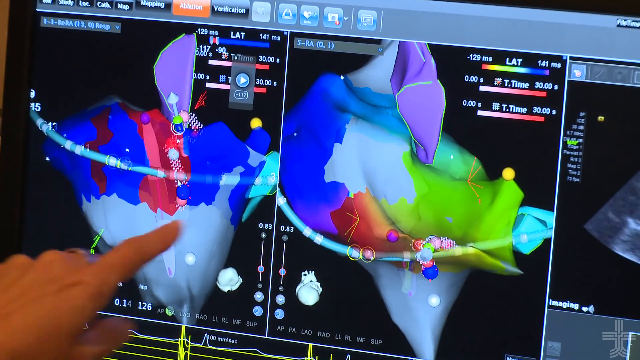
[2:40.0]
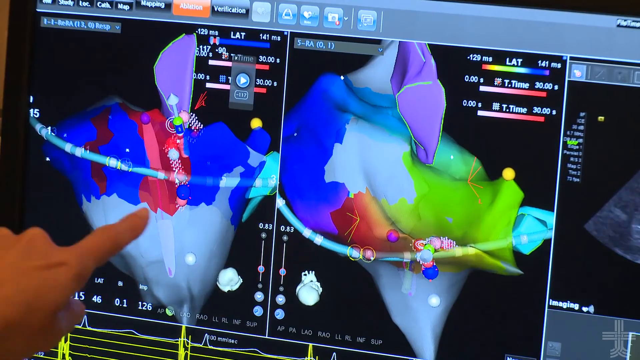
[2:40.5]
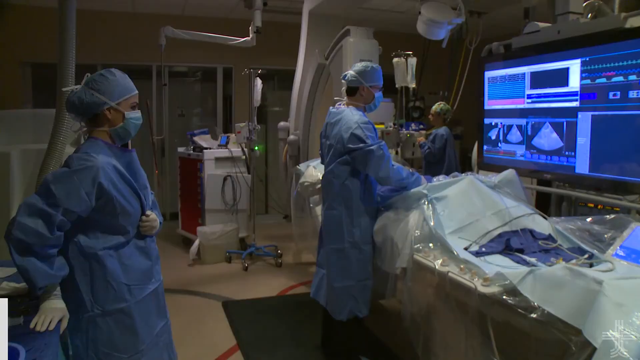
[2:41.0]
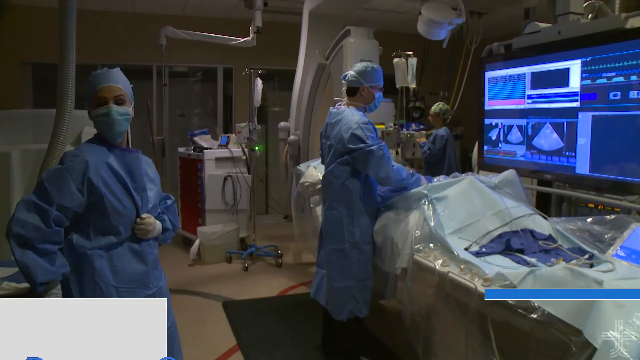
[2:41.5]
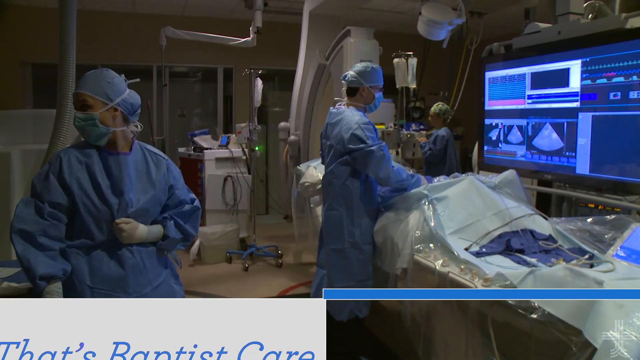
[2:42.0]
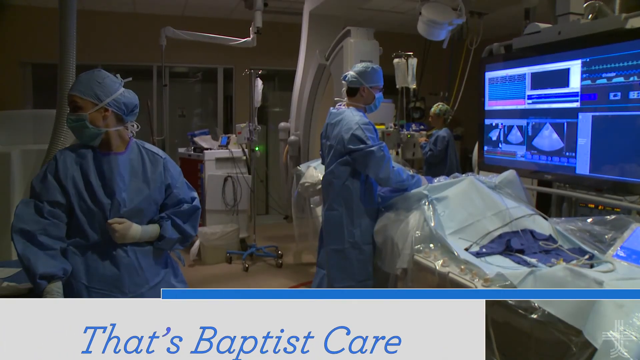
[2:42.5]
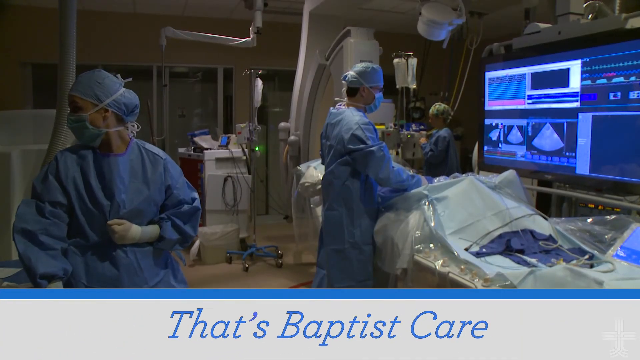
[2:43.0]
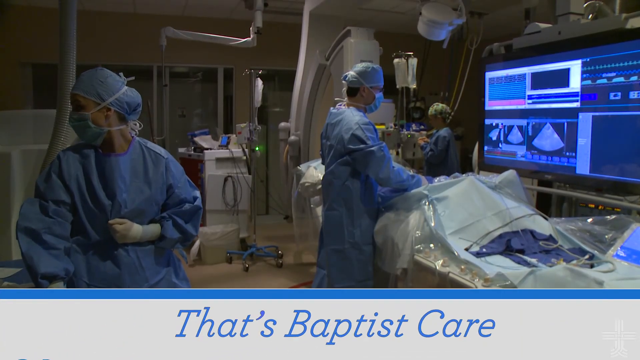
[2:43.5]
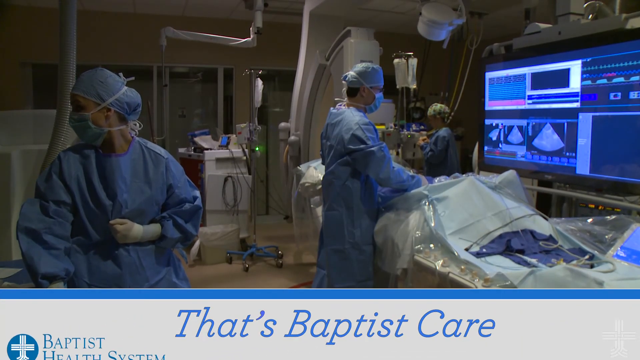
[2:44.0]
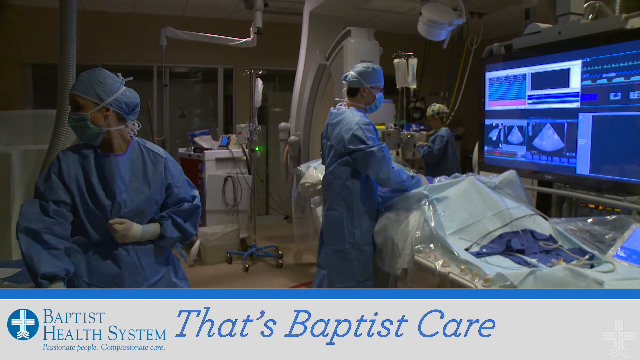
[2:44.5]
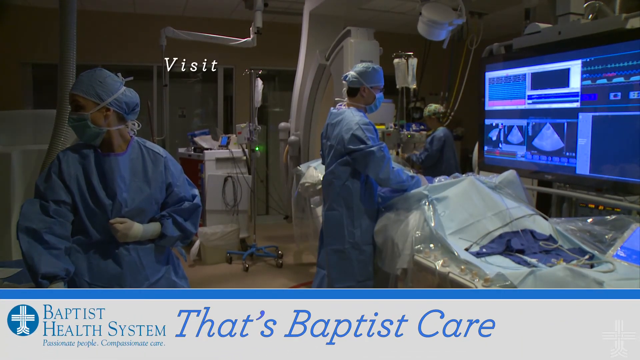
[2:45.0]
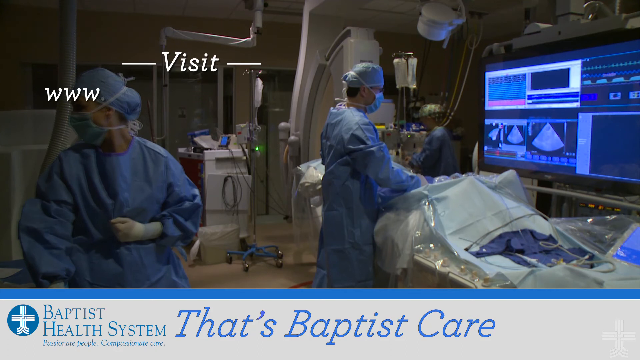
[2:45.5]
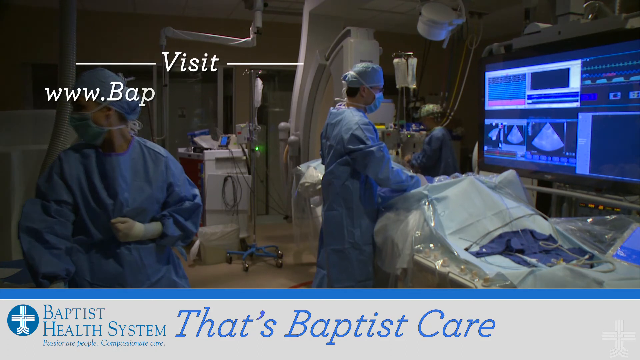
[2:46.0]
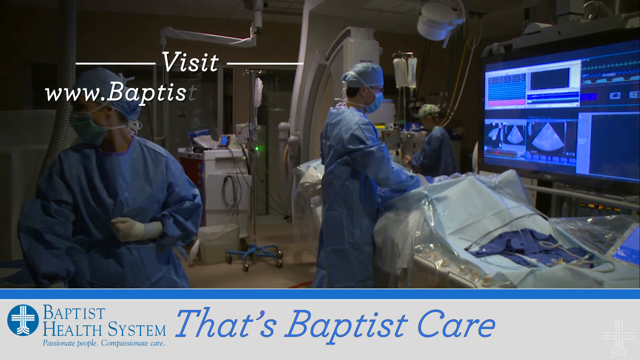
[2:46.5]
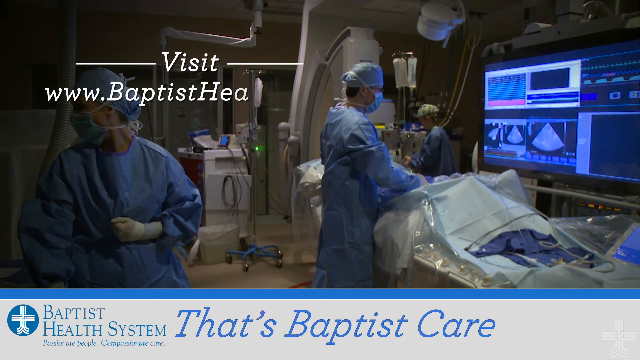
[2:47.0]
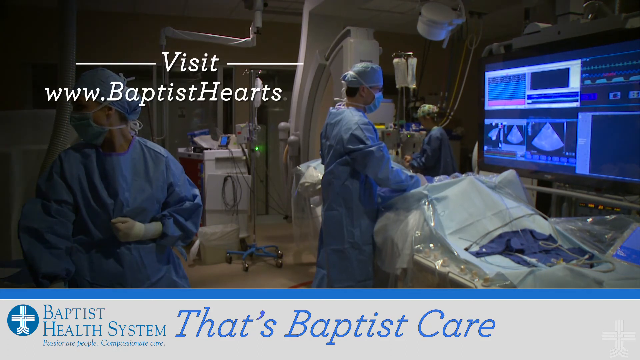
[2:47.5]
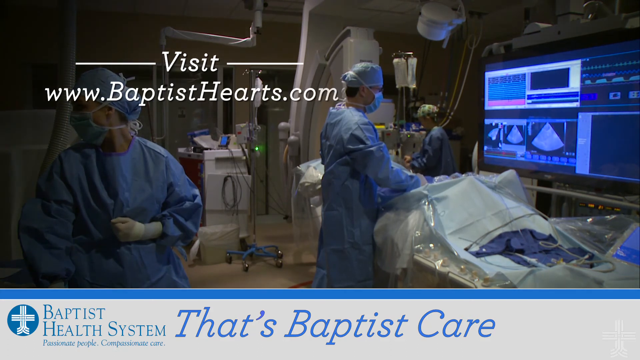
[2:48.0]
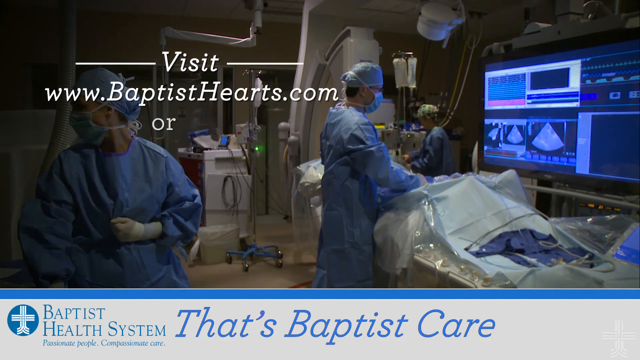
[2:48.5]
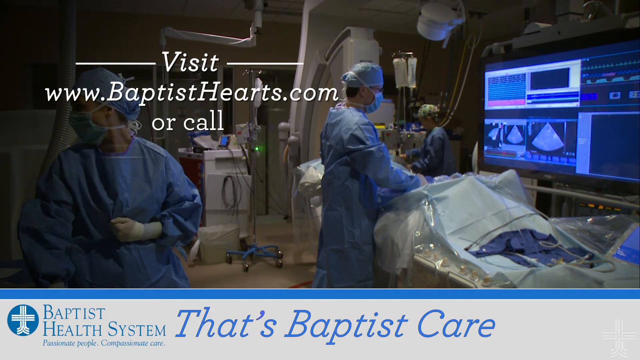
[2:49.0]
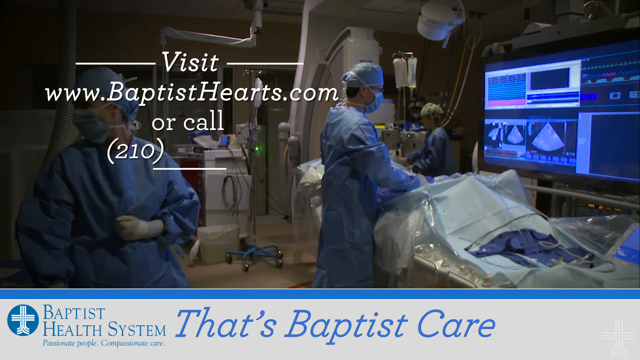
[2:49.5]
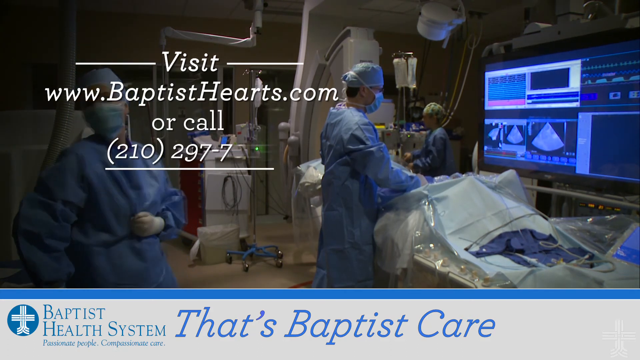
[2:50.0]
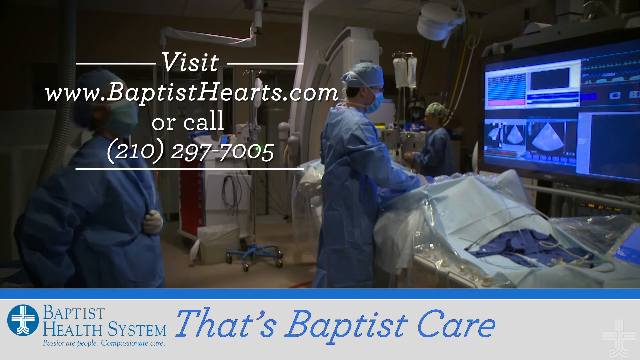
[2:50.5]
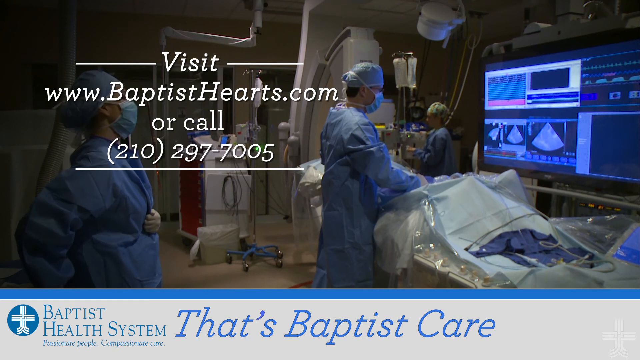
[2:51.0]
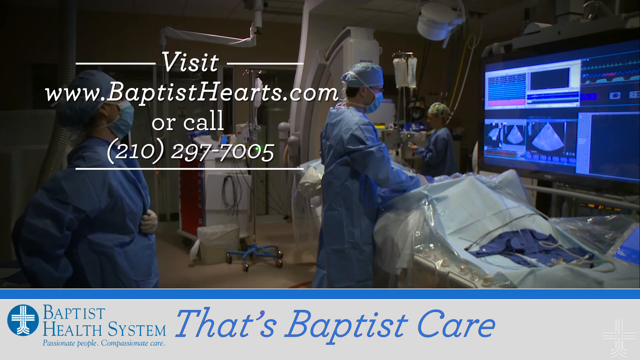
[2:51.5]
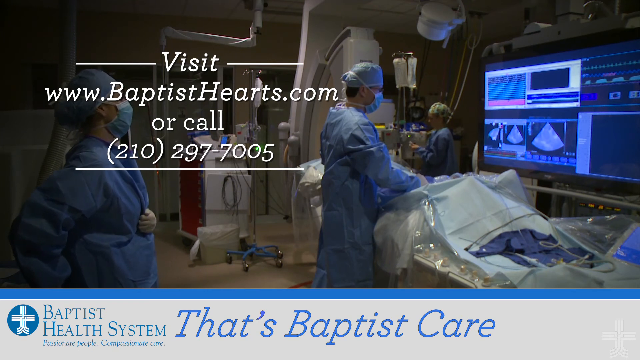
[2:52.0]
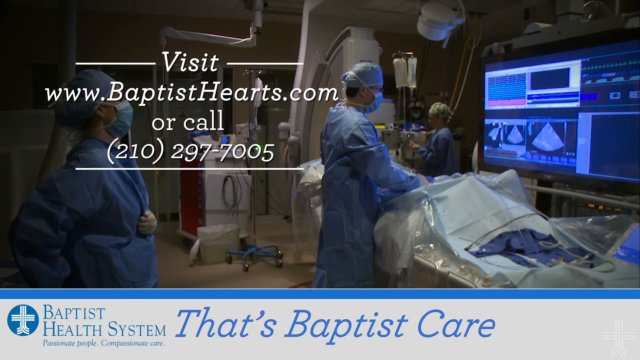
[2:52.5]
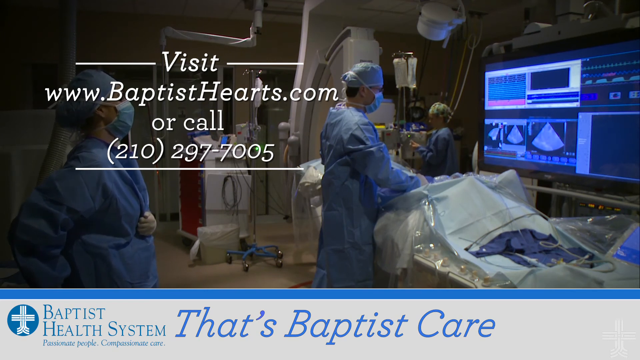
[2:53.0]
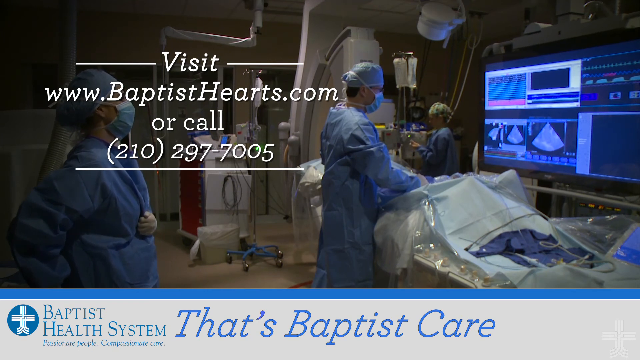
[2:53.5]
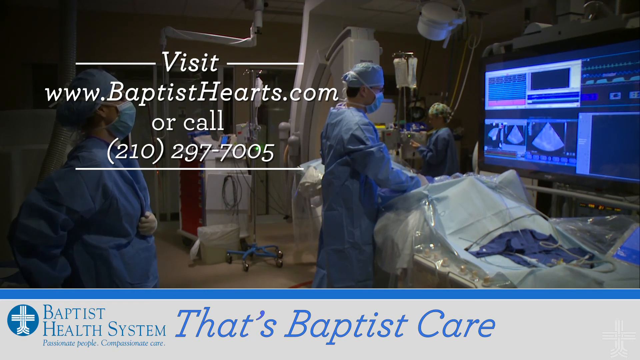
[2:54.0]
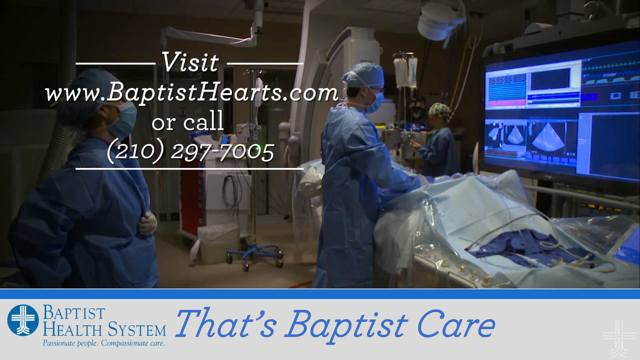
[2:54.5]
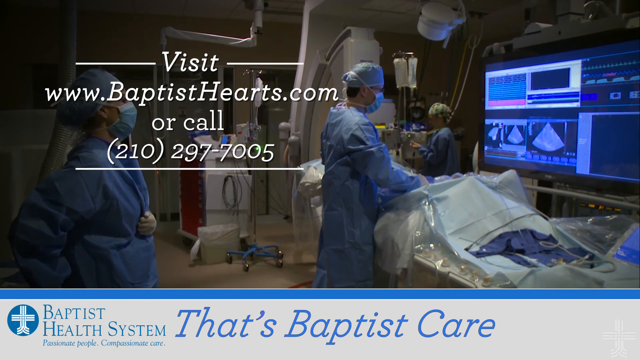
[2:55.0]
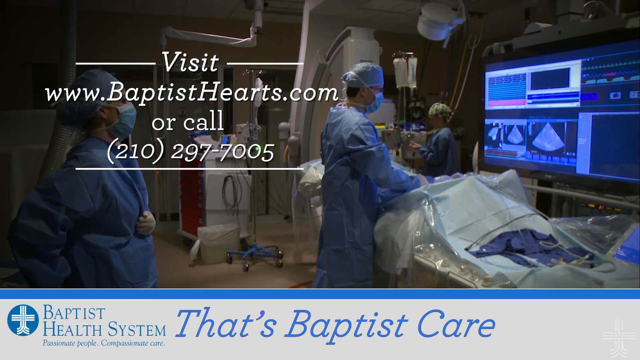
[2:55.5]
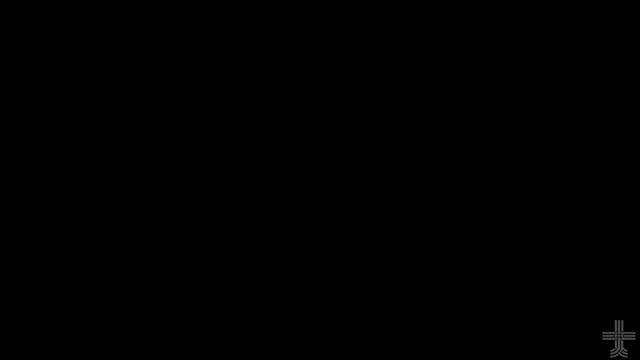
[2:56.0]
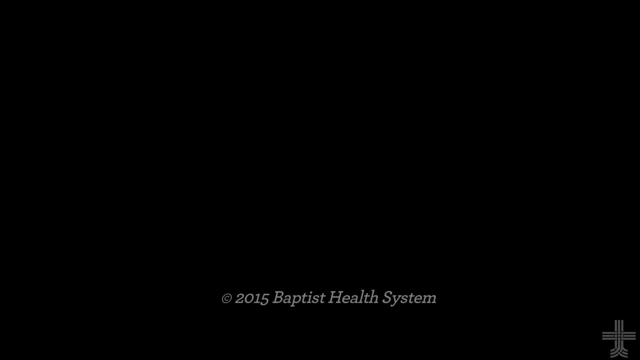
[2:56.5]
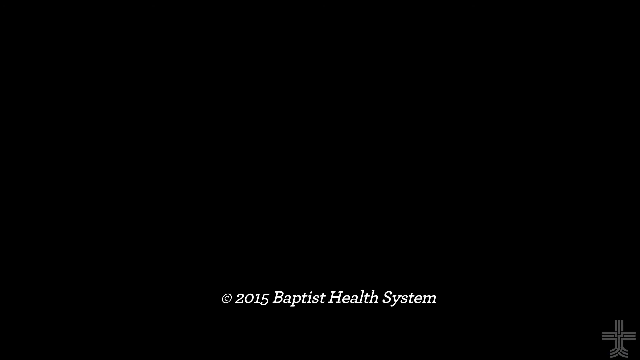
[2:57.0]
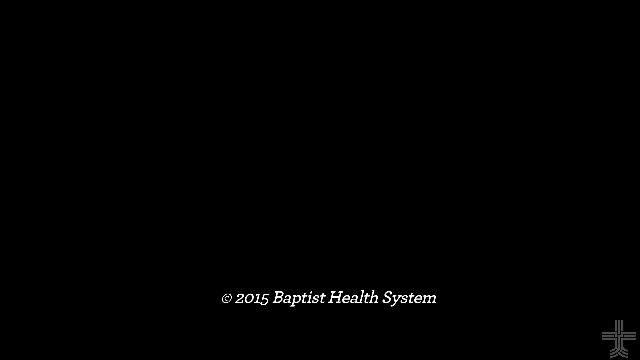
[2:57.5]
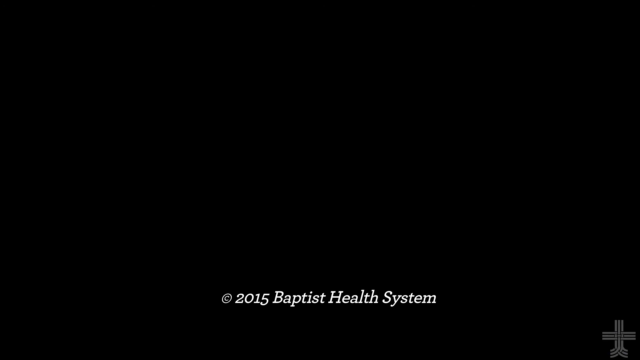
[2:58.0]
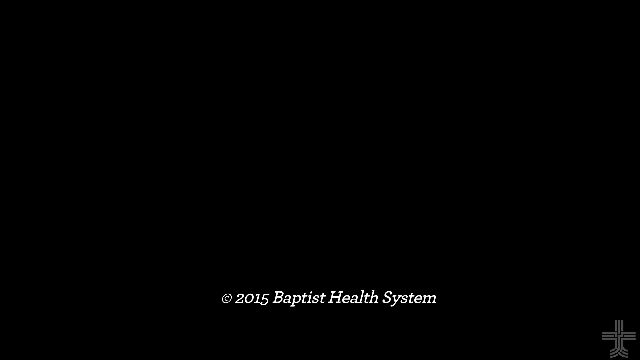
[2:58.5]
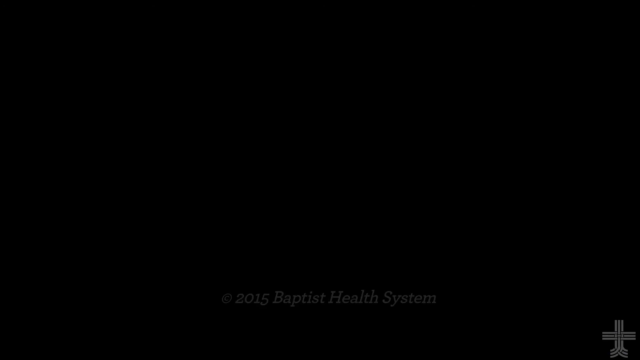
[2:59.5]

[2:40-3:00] Someone points to the 3D model as if explaining what happens or happened during the procedure. The view shifts to a procedure room where the doctor with the dark hair performs the procedure on the patient. A female medical professional in the background is near the IV, possibly handling anesthesia, and another female medical professional on the left of the screen wears a blue surgical gown, a blue scrub cap and a mask. A white banner with a blue line at the top comes across the bottom of the screen, reading "that's Baptist's Care" in blue font. The screen freezes in that position and the words "visit www.baptisthearts.com or call 210-297-7005" come across the screen in white font. The screen eventually goes black, and at the bottom it reads "copyright 2015 Baptist Health System" in white font.